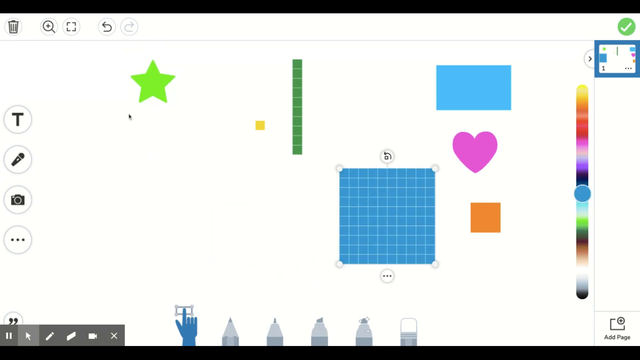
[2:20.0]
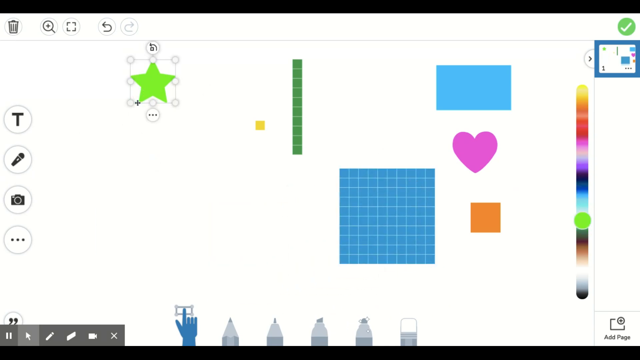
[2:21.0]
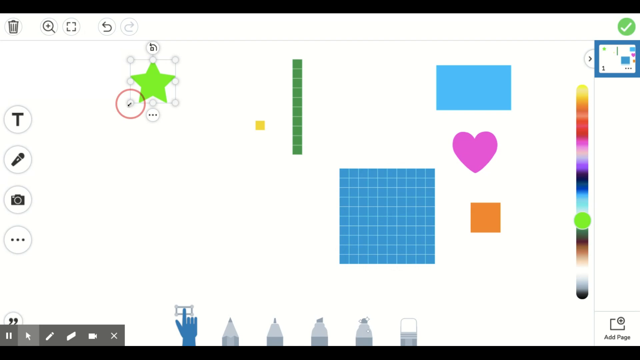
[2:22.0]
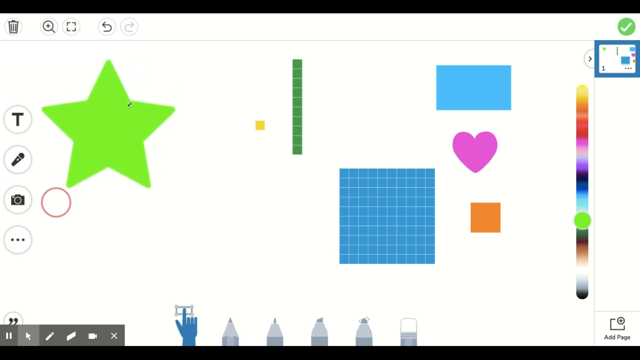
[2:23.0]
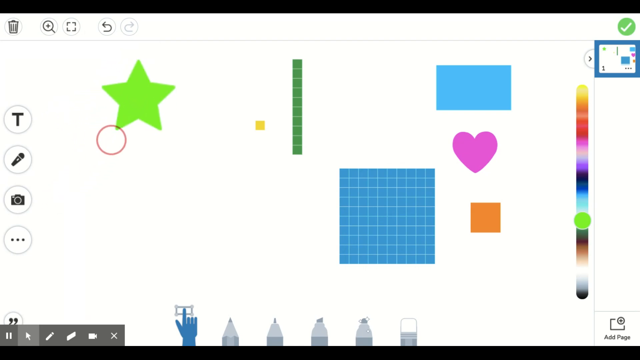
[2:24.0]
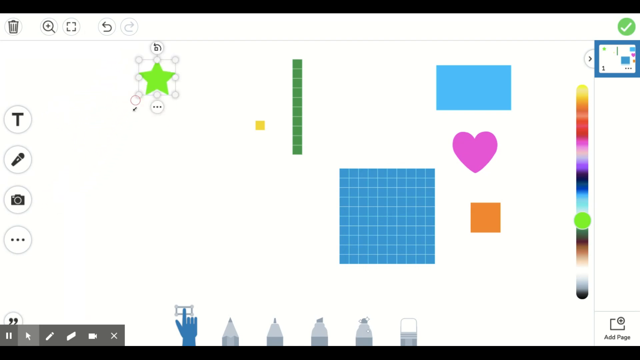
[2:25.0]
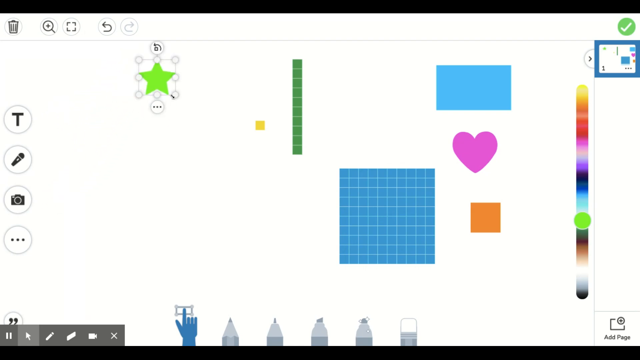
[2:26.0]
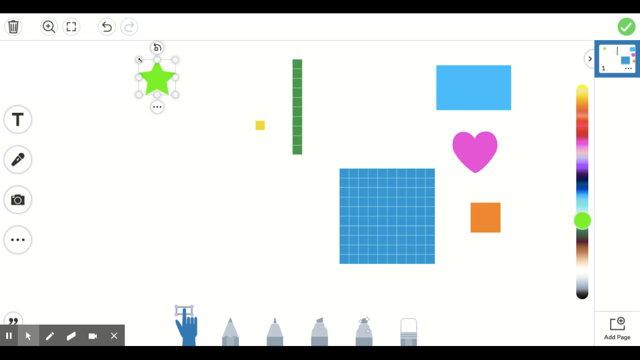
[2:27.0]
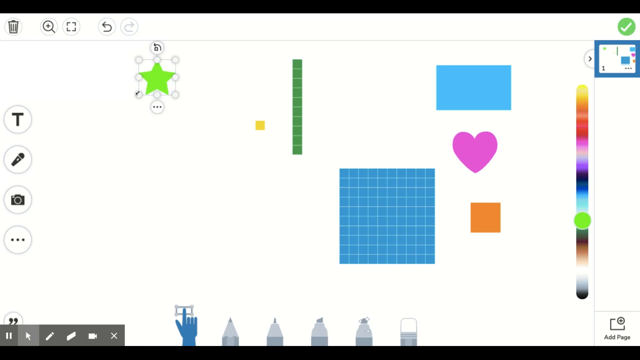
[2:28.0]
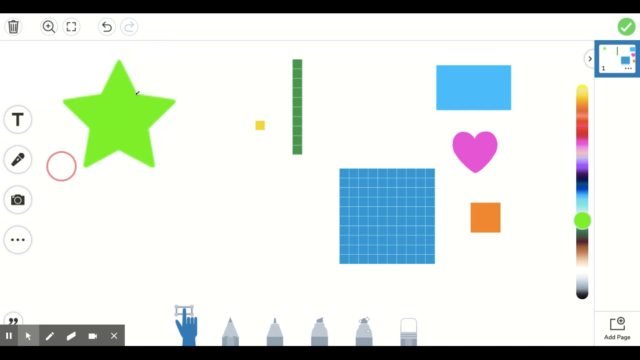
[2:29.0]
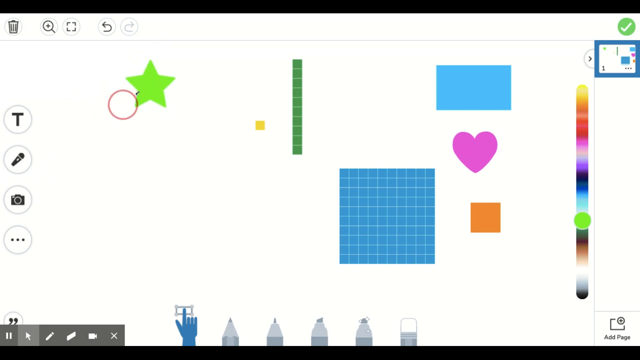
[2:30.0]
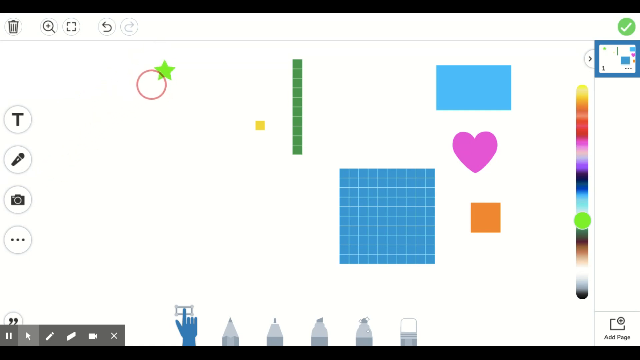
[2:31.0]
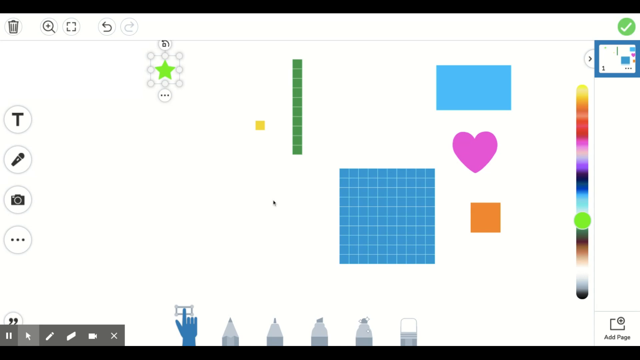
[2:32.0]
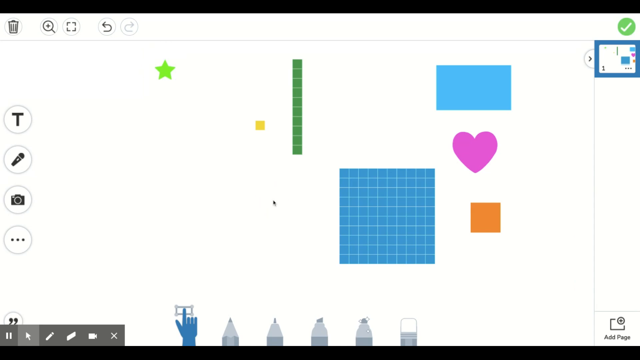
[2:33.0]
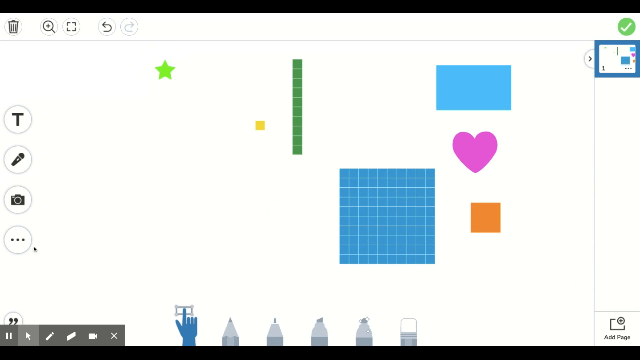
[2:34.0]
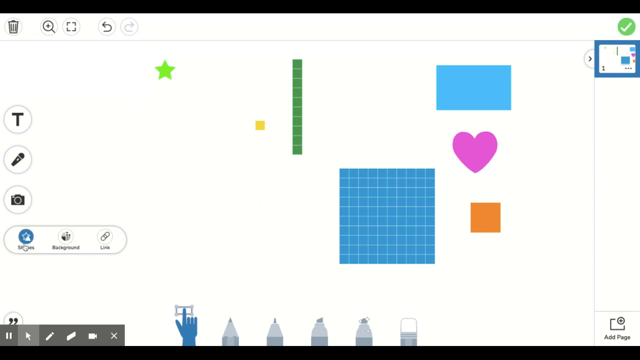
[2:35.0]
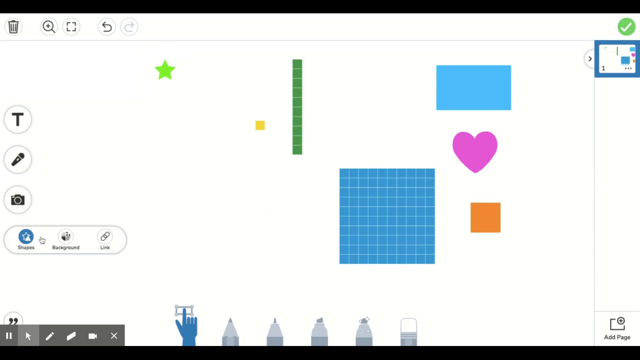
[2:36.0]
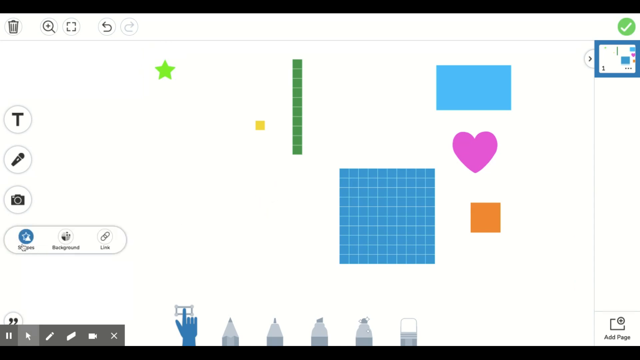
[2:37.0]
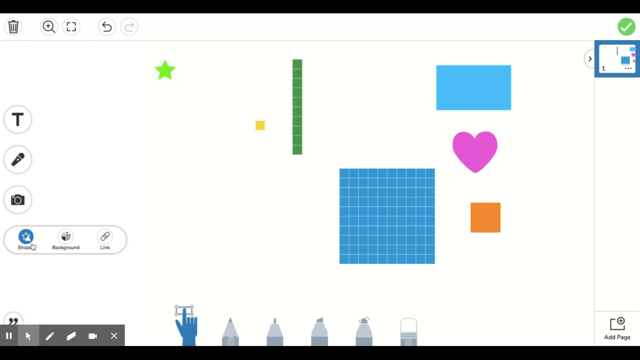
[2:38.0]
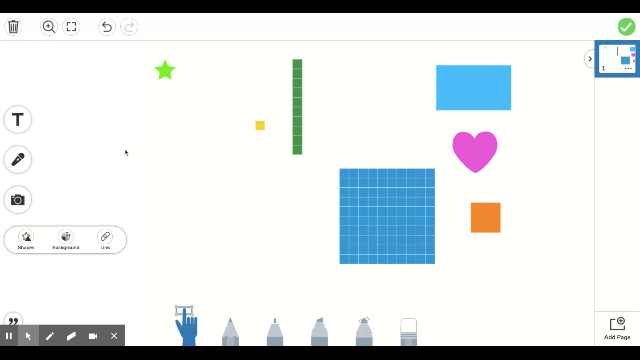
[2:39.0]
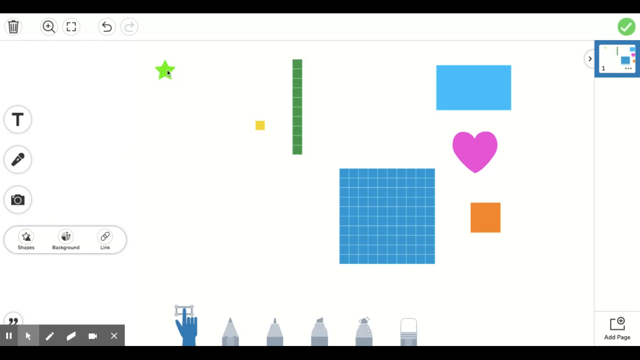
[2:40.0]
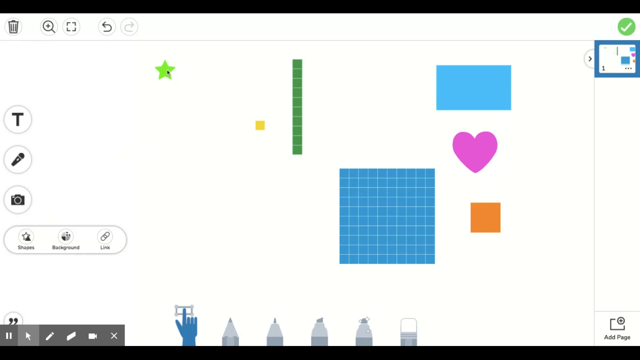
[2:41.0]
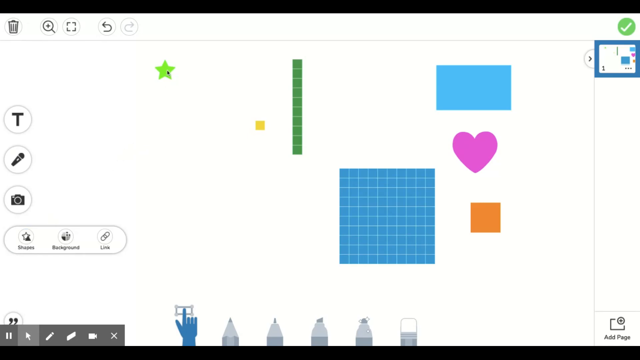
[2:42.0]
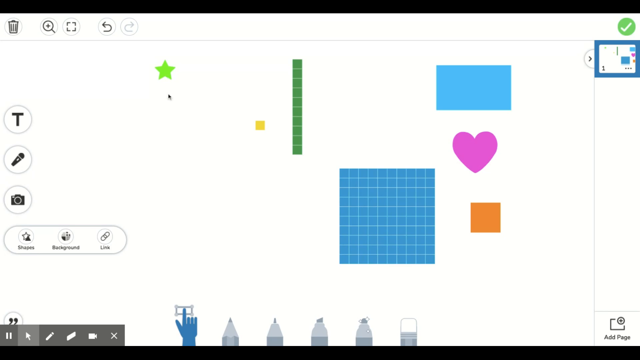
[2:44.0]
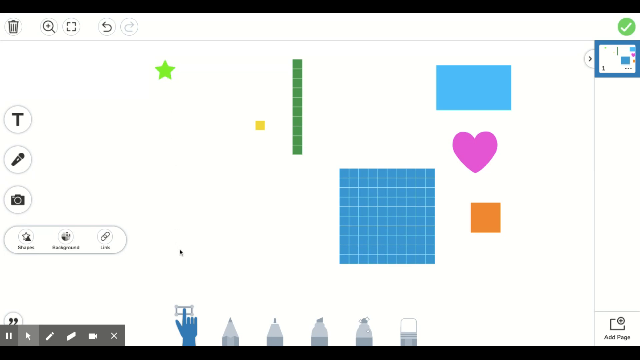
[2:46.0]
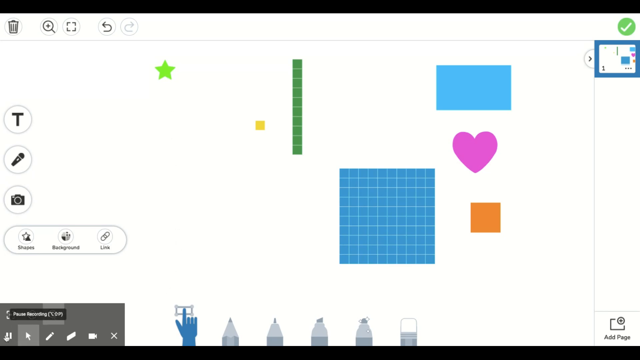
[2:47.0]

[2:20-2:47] A number of shapes in different colors and sizes are in the middle of the screen, with options on the edges: a color gradient on the right, drawing utensils on the bottom, and options for a microphone and picture, among others, on the left. The user clicks the neon green star, bringing up lines and small circles around it to show it is selected. They click and drag its bottom left corner, where a red circle appears, to make the green star bigger, then do the opposite to make it smaller. They do it again to demonstrate how small it can get, leaving it much smaller than before. They then click the three horizontal dot button on the left-hand side and highlight the first option by moving the cursor around it. The cursor moves up to the green star and then back down to the bottom left corner, where the user clicks a pause button.